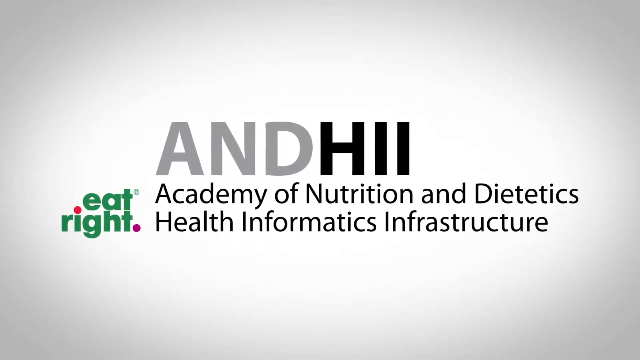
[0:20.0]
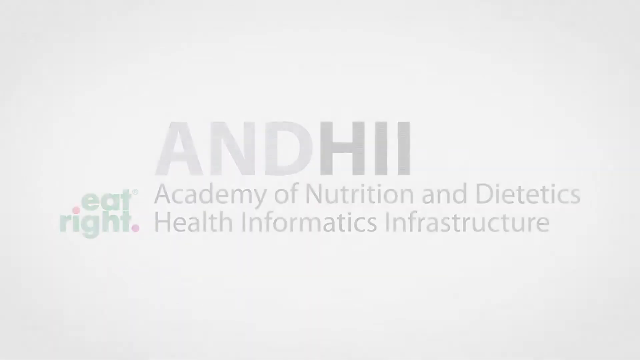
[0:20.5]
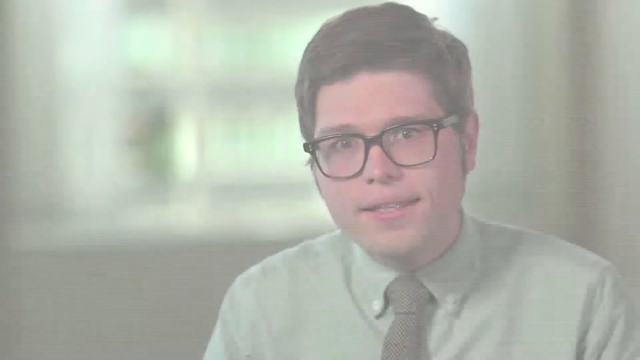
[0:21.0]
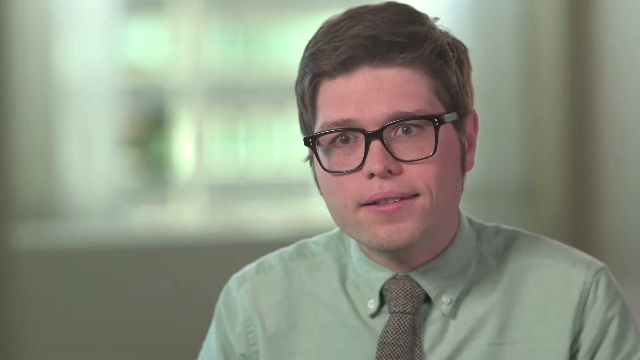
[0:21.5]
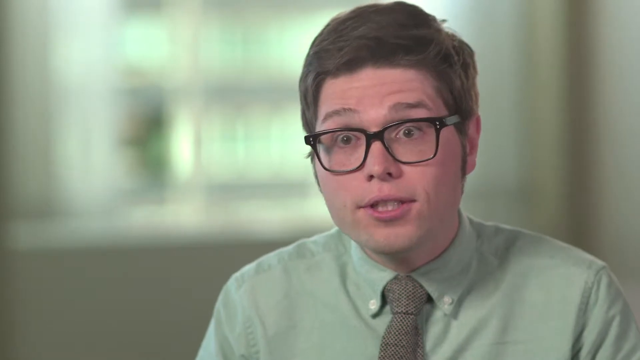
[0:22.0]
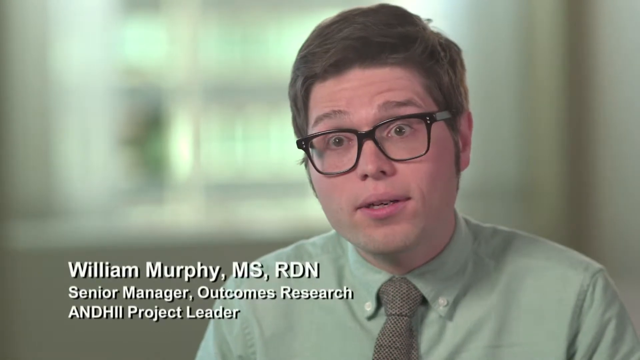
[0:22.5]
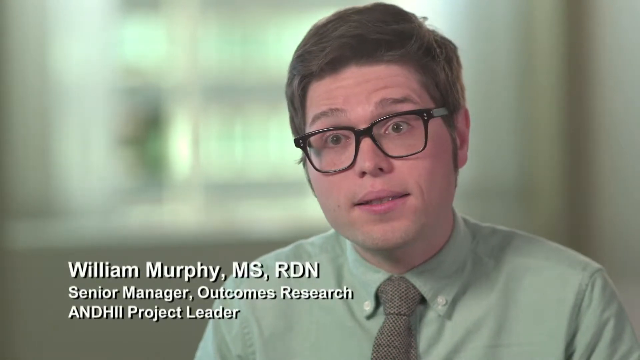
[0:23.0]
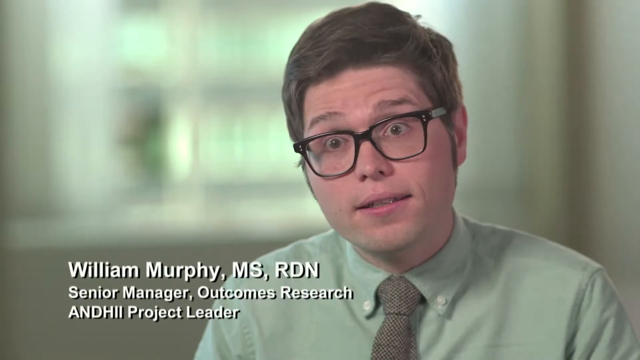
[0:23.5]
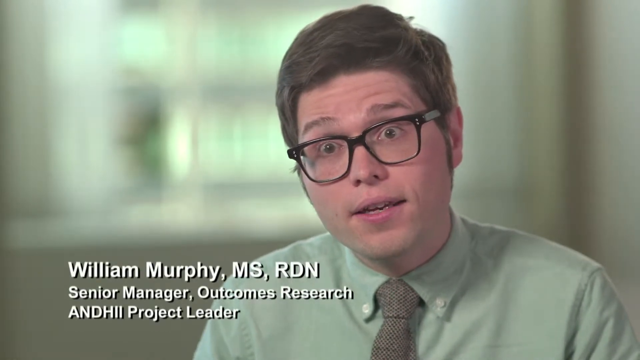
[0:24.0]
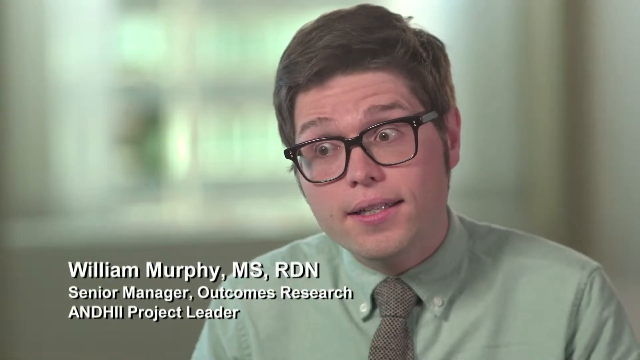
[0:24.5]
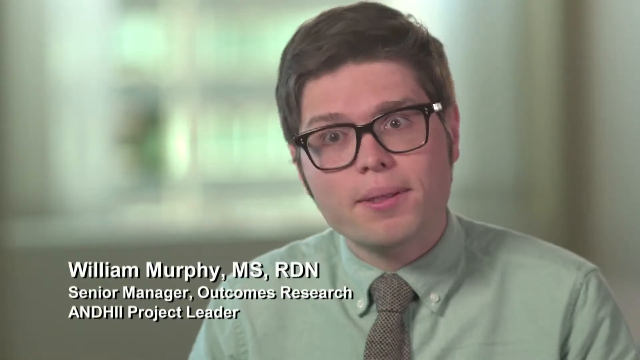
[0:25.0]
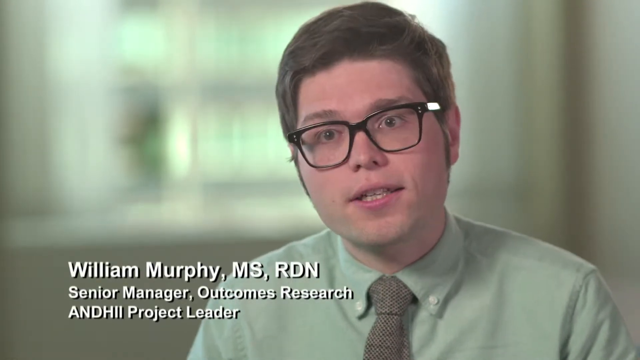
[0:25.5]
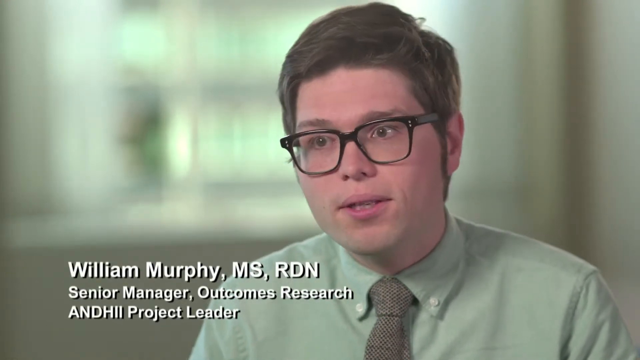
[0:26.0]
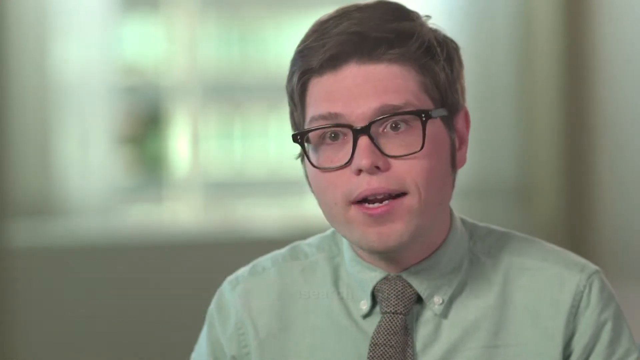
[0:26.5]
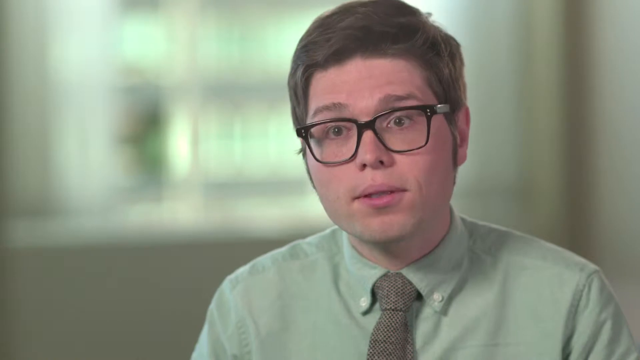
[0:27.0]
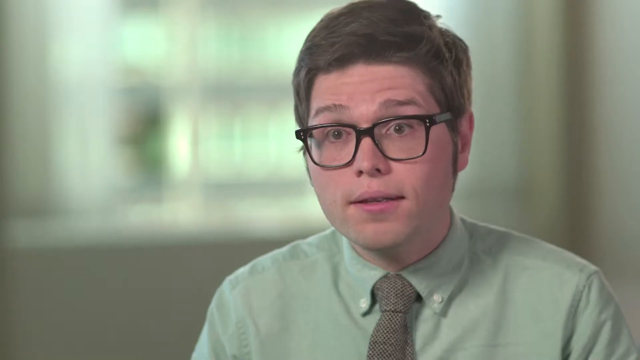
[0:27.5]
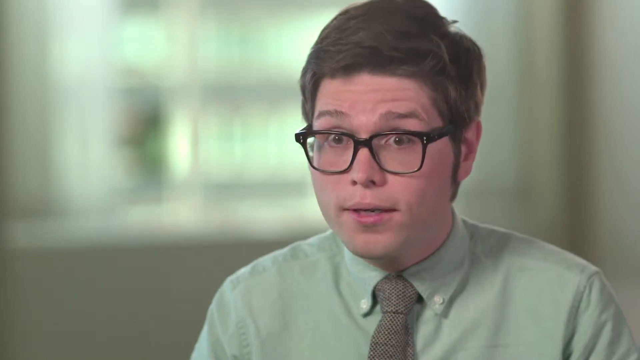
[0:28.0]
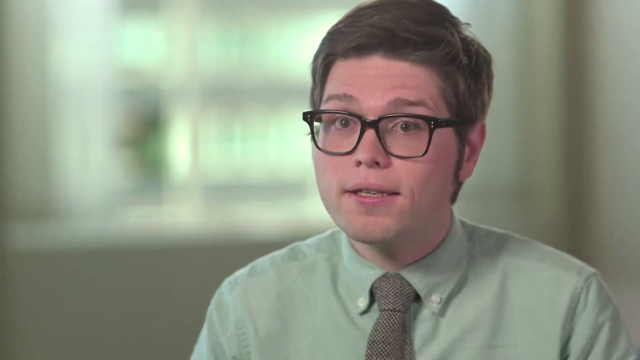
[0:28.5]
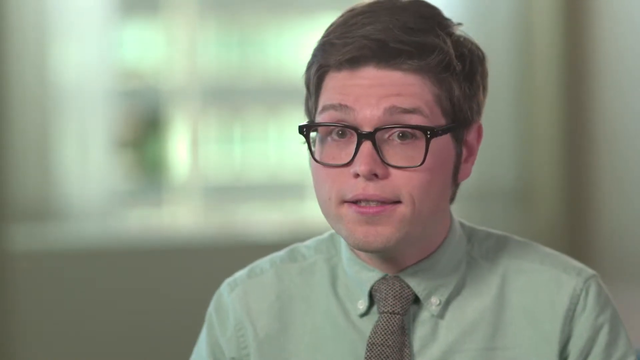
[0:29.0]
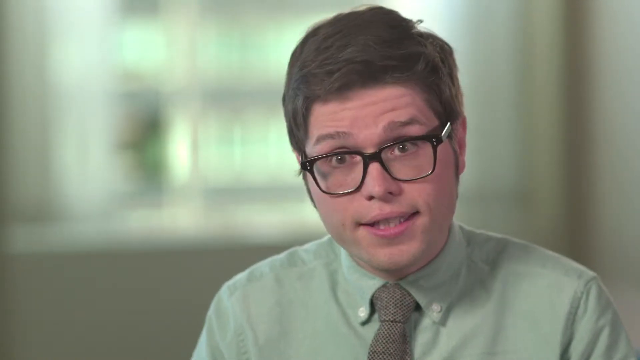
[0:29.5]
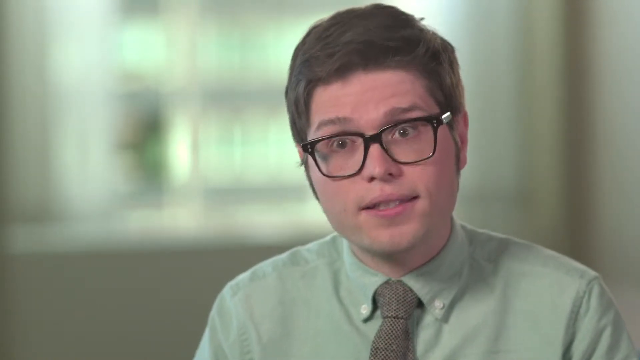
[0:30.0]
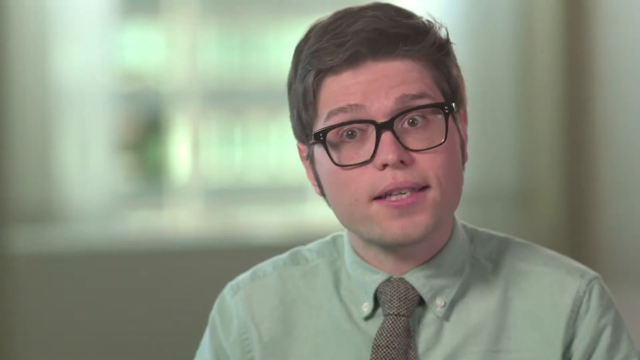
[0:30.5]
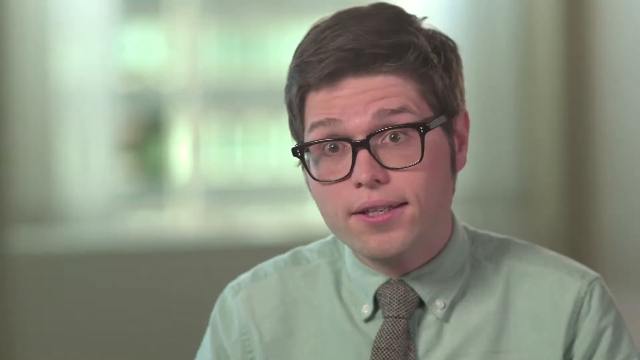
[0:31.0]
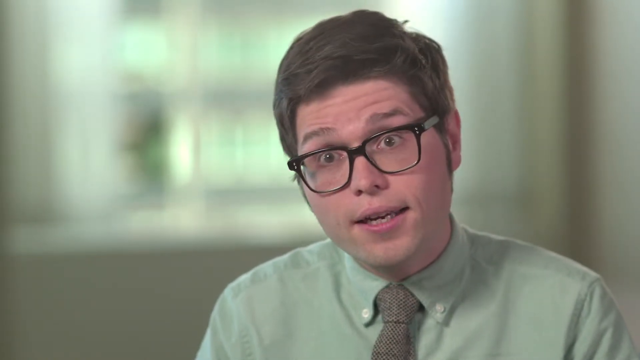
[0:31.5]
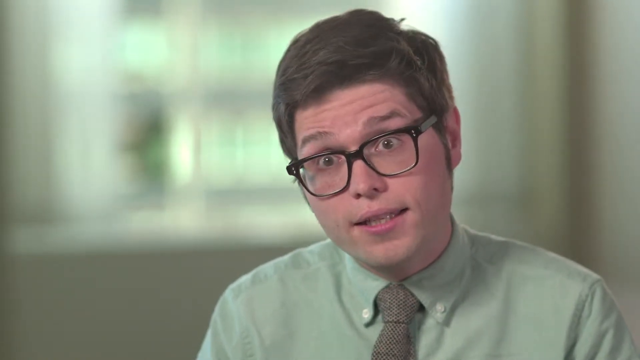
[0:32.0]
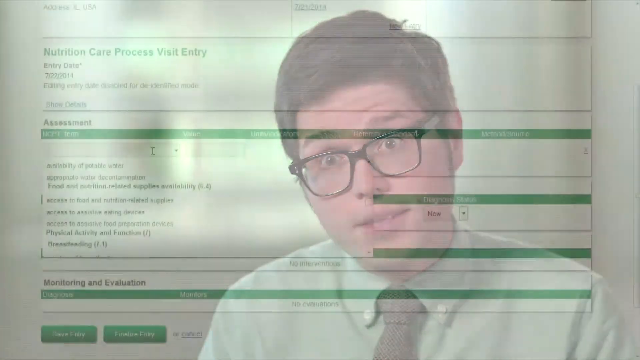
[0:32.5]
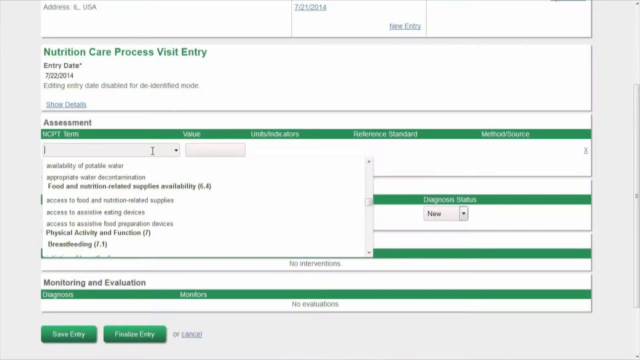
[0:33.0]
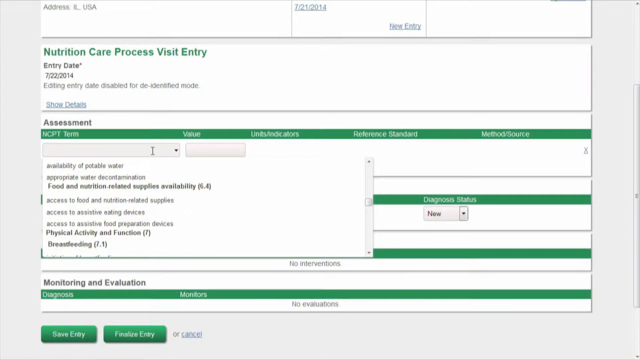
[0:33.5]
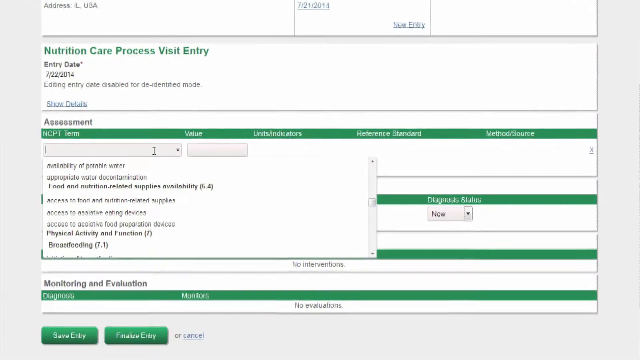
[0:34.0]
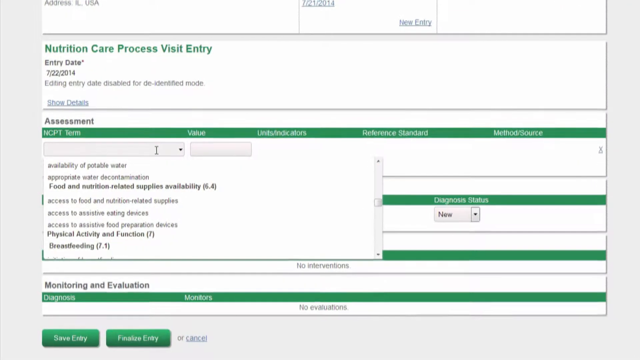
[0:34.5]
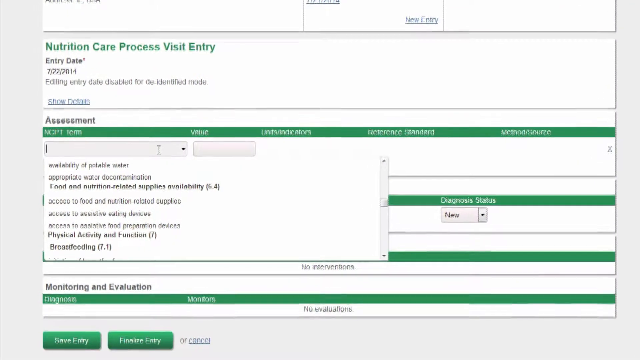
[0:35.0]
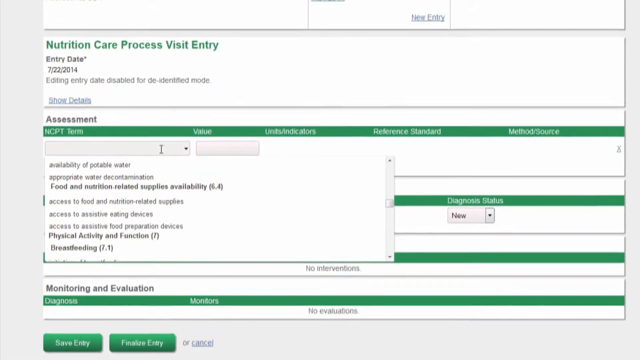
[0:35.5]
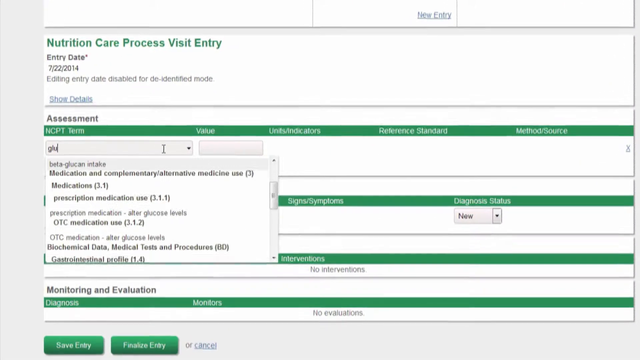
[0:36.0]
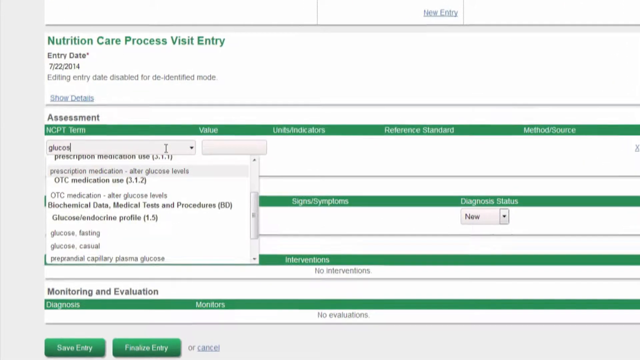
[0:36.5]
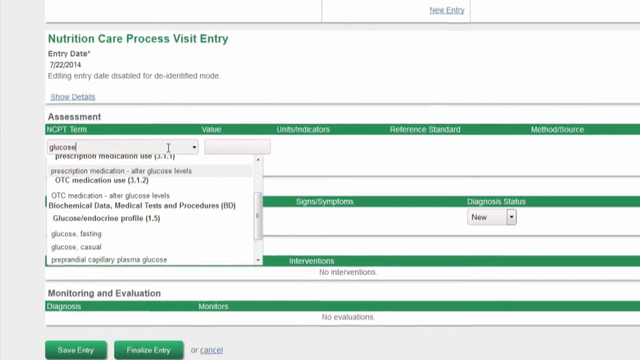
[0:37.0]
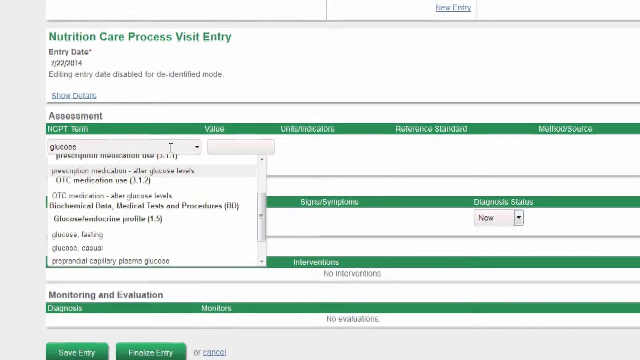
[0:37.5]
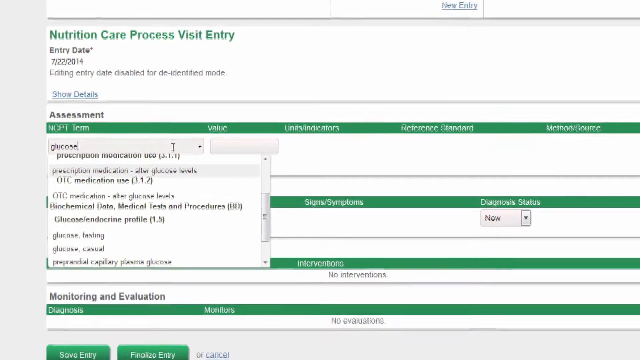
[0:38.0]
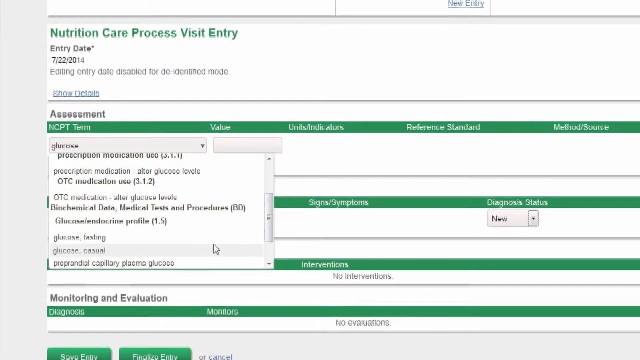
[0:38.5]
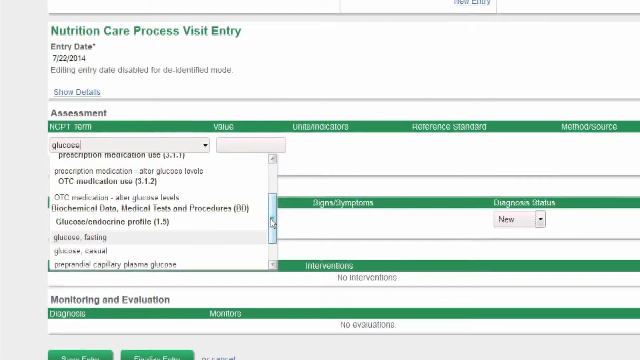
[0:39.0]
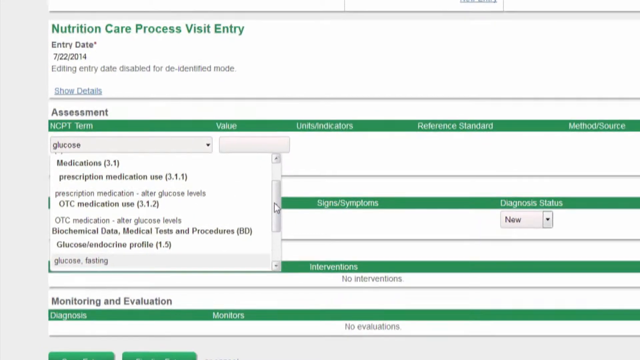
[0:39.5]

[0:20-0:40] A gray and black gradient screen shows the AND HII Academy of Nutrition and Dietetics Health Informatics Infrastructure branding, with "eat right" in green on the left side. It fades into an office with light beige walls and a big window in the background. A young man who looks to be in his mid-20s, with short dark hair, long sideburns and black plastic-rimmed glasses, speaks earnestly toward the camera. He wears a light gray shirt with a tie, and he is a senior manager of outcomes research. The video then shows a form on a computer with a white background, green stripes, and green and black print: a nutrition care process visit entry containing patient information, including the patient's background, the medications they take, and the different things to assess to know their nutritional needs.